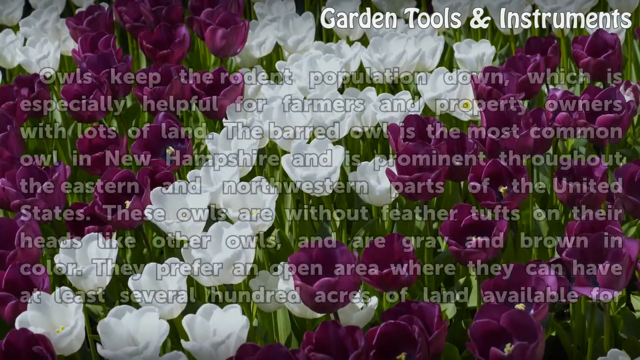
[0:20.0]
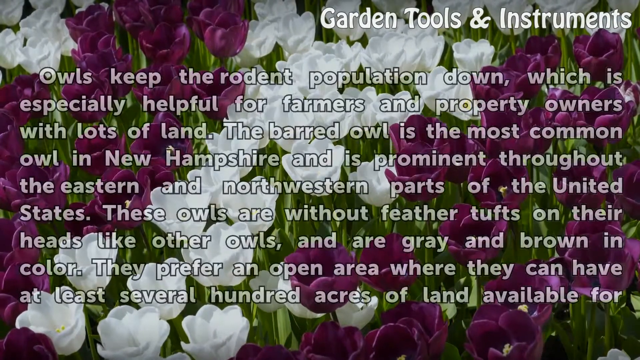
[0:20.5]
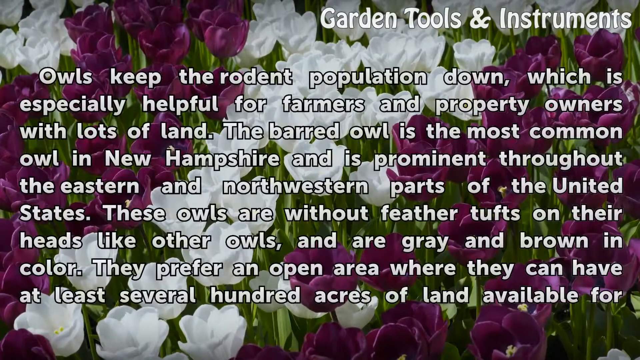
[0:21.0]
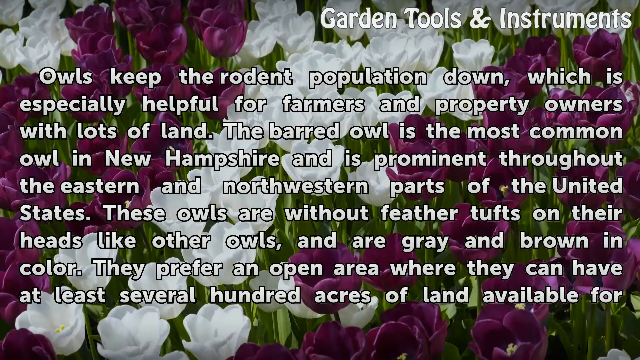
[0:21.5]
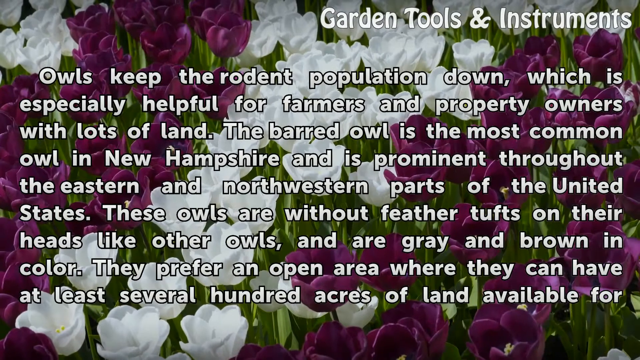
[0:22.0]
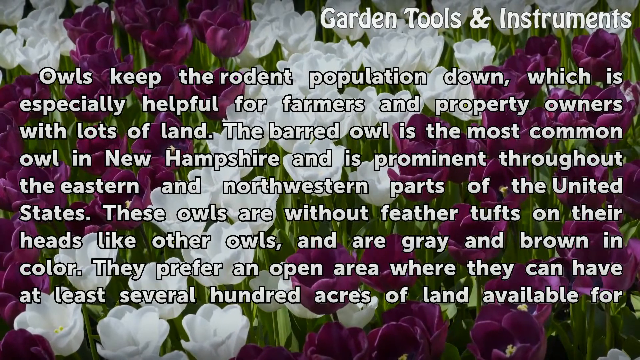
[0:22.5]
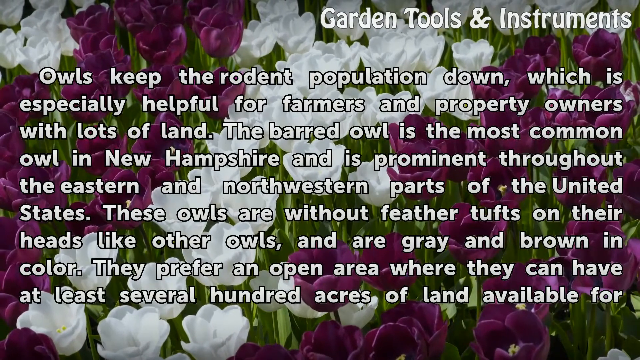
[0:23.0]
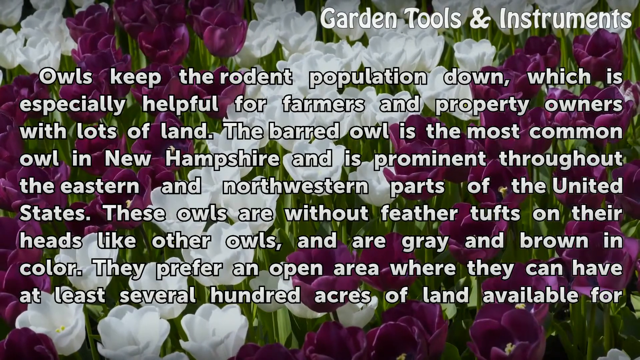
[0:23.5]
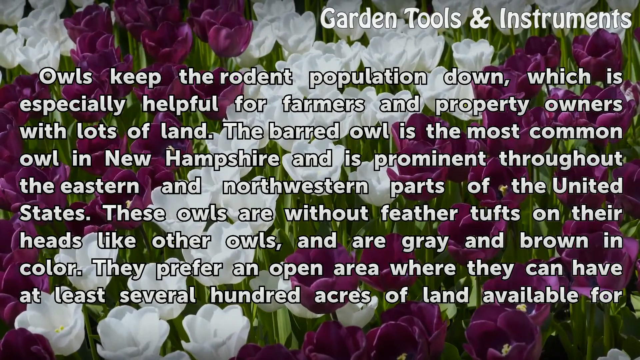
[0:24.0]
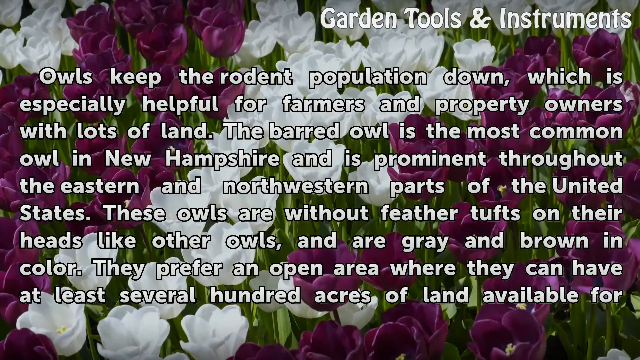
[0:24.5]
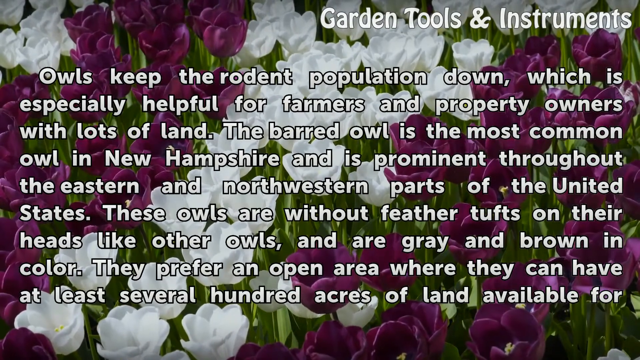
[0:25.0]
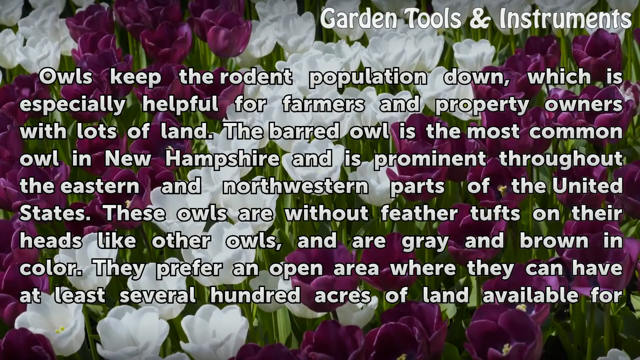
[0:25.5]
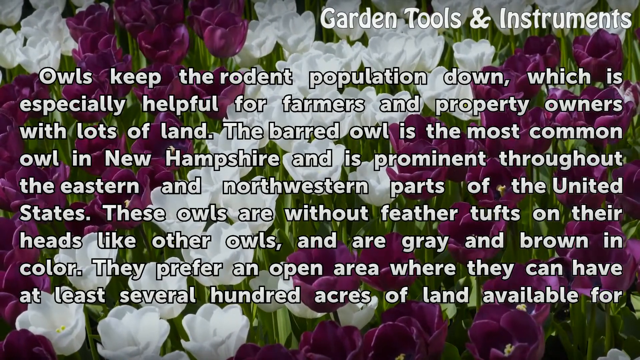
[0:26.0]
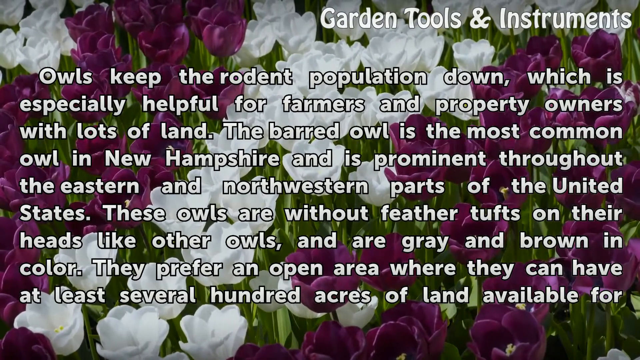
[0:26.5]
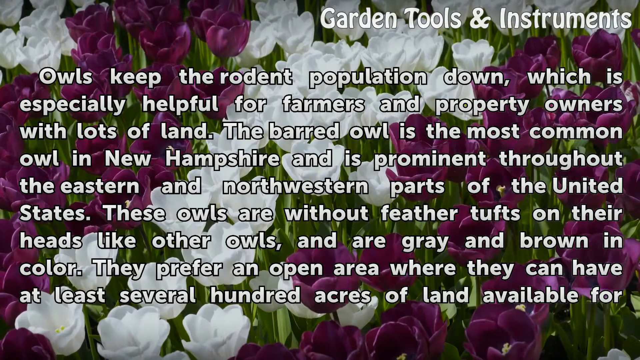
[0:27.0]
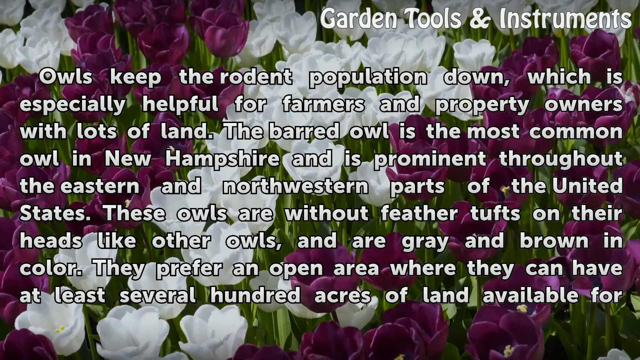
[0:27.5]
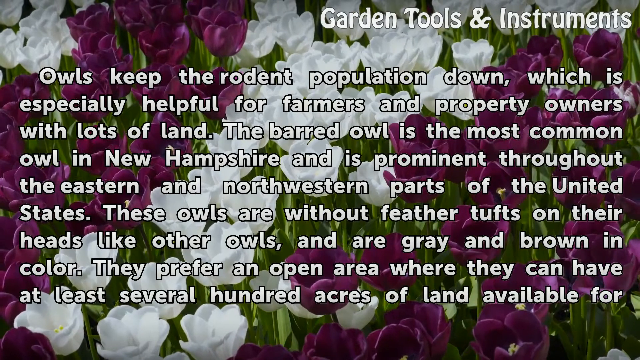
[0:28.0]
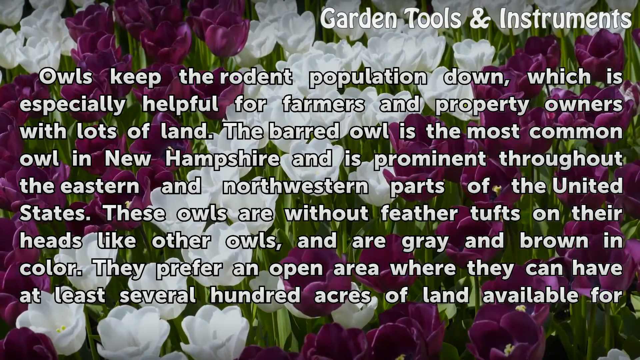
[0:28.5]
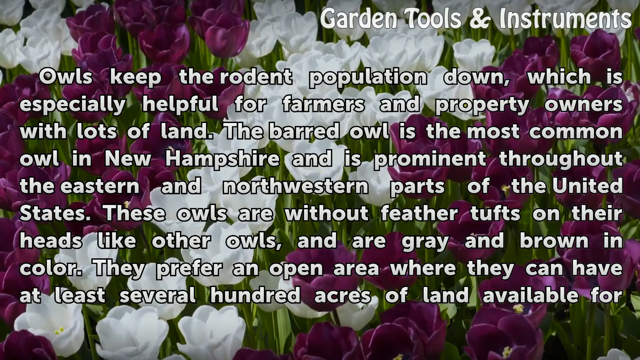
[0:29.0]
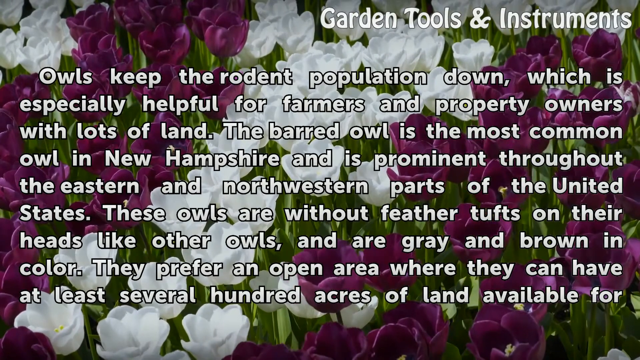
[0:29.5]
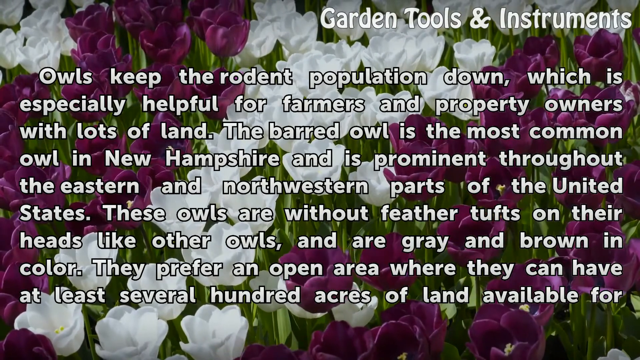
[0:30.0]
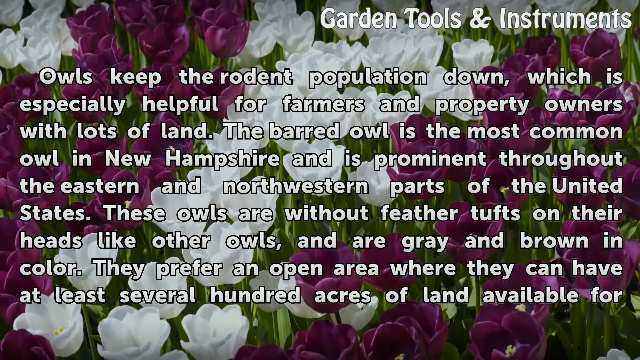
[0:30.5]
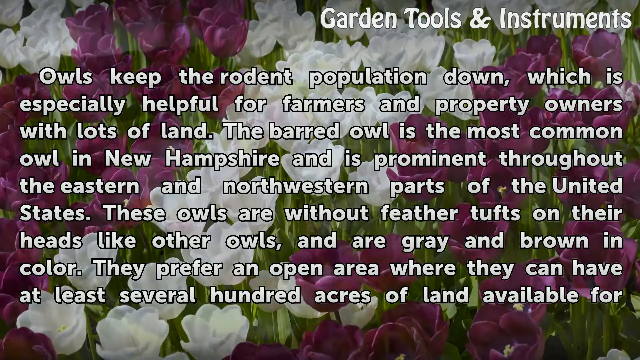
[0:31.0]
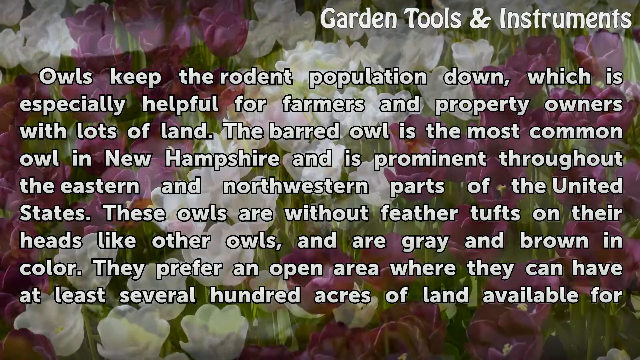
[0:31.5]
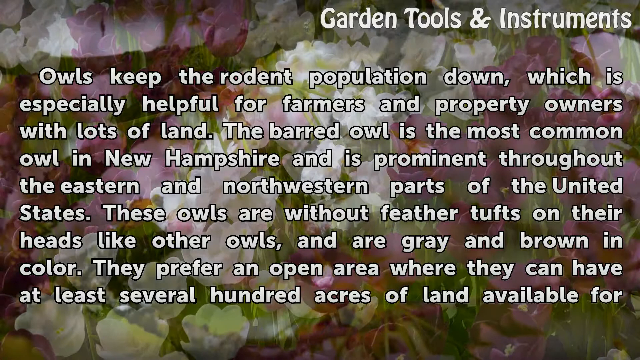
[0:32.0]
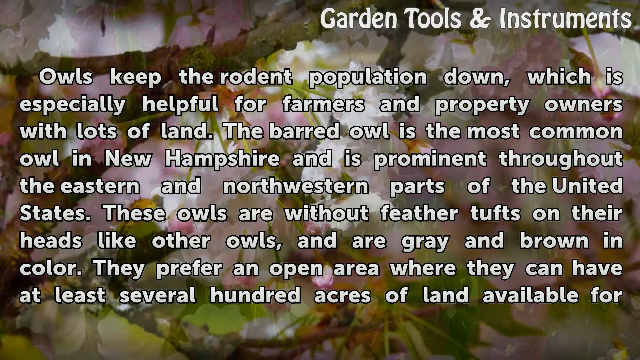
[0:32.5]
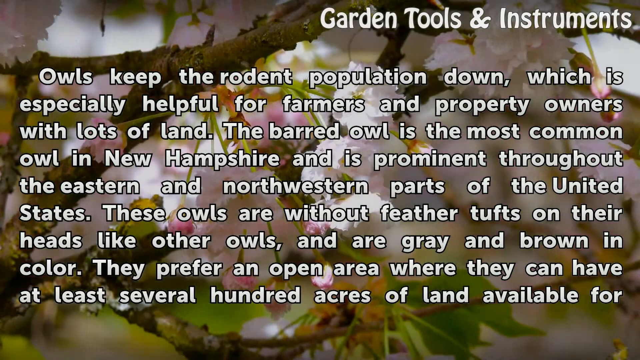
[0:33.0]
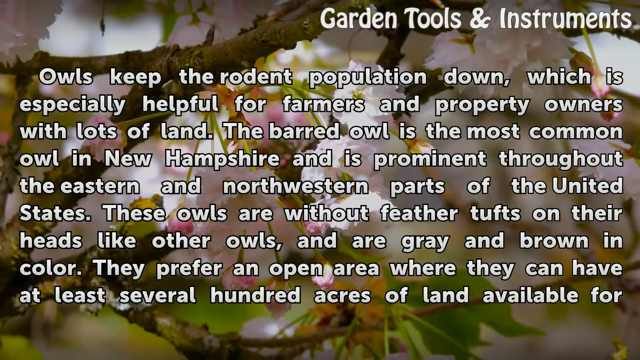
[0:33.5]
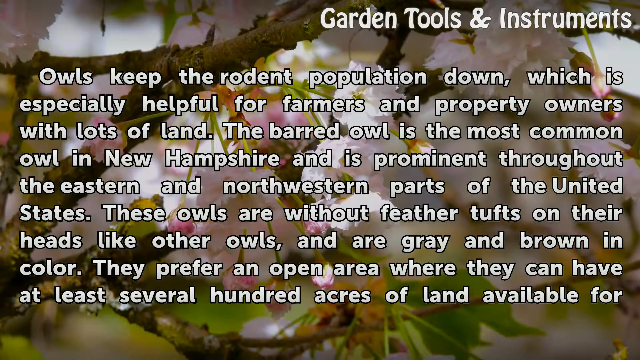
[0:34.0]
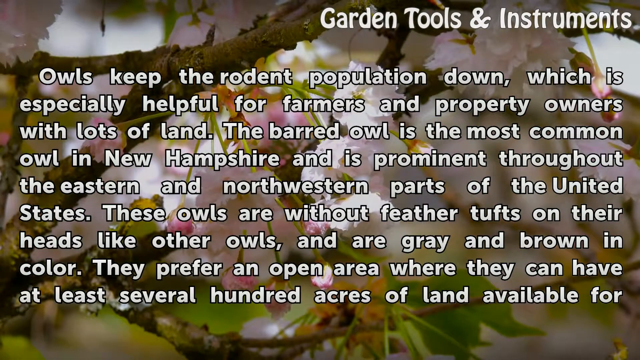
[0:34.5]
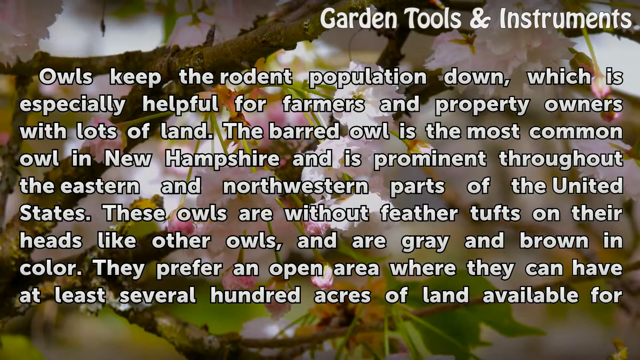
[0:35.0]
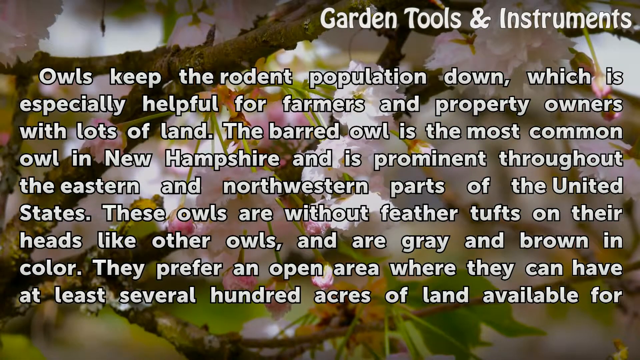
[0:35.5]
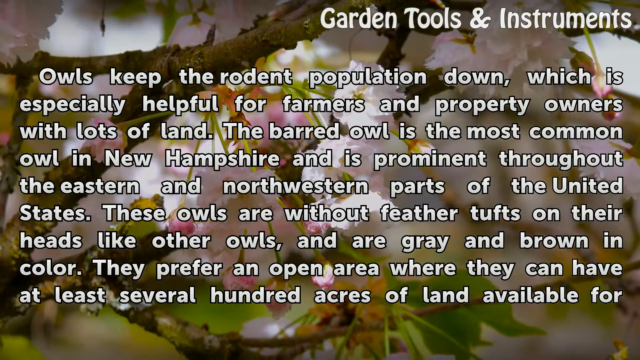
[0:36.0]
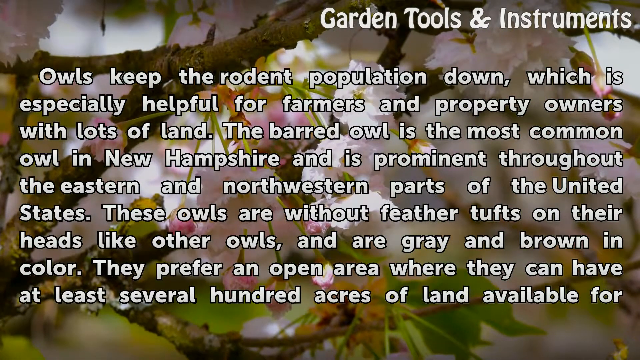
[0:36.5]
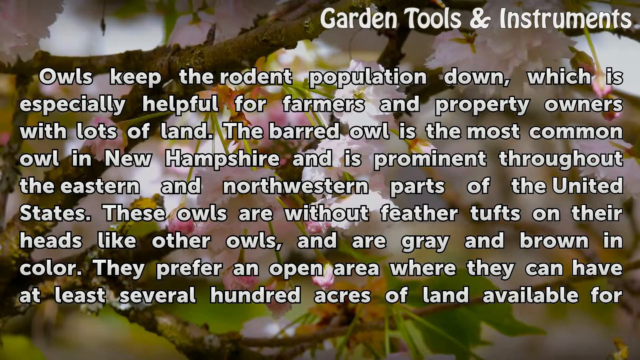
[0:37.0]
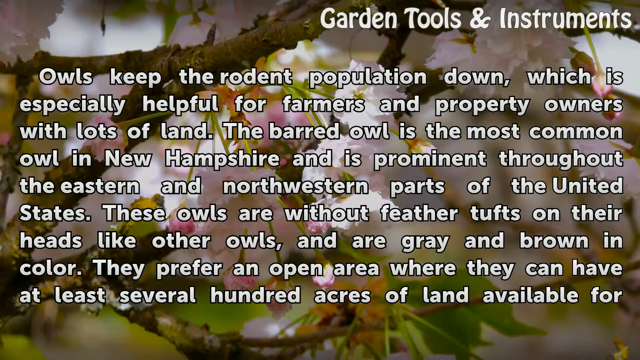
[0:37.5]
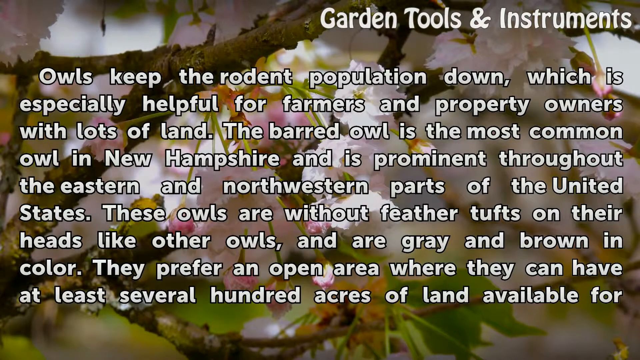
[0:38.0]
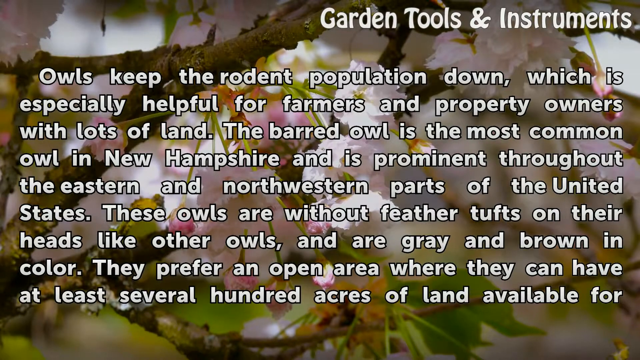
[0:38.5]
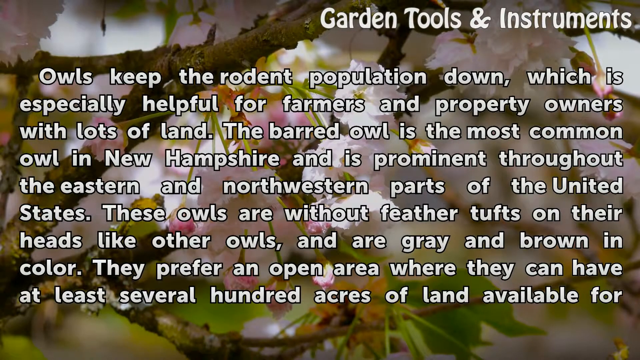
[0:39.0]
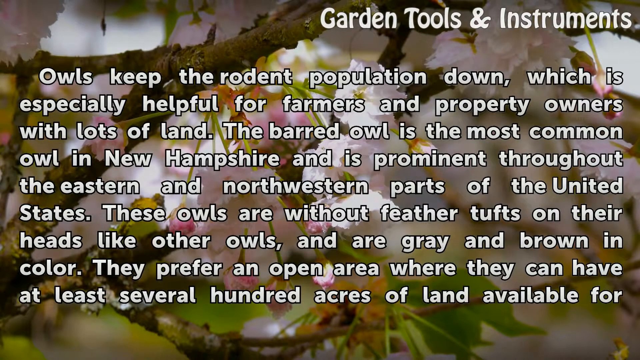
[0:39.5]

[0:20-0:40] The background is a video of many purple and white petaled flowers on long, skinny green stems, their petals pointing upward somewhat like a tulip's. In the top right corner, white bubble letters read "garden tools and instruments." White text covering the whole screen over this background reads: "Owls keep the rodent population down, which is especially helpful for farmers and property owners with lots of land. The barred owl is the most common owl in New Hampshire and is prominent throughout the eastern and northwestern parts of the United States. These owls are without feathered tufts on their heads like other owls and are gray and brown in color. They prefer an open area where they can have at least several hundred acres of land available for..." The background then changes to what looks like a thin brown branch in the air, with small light pink petaled flowers stuck to the branches.